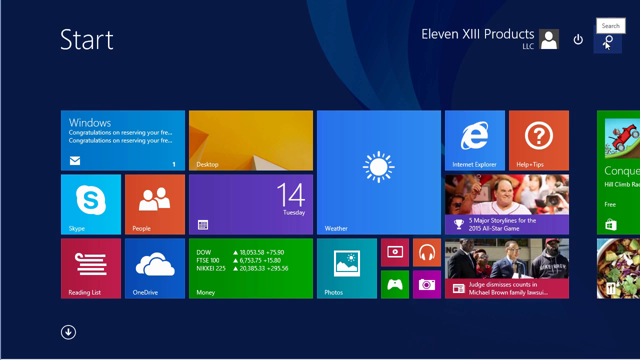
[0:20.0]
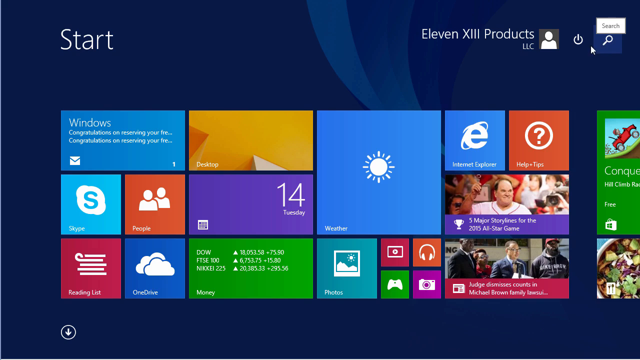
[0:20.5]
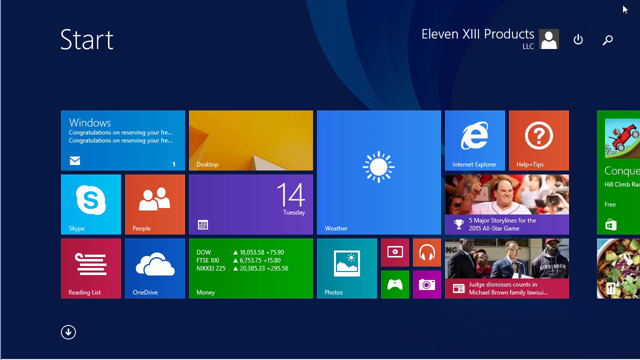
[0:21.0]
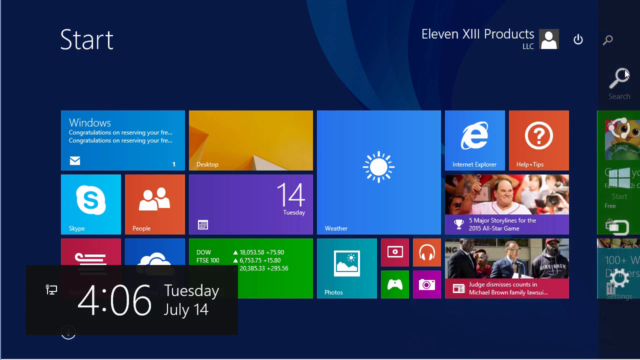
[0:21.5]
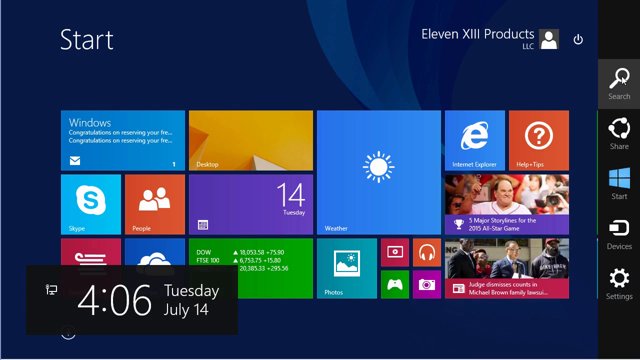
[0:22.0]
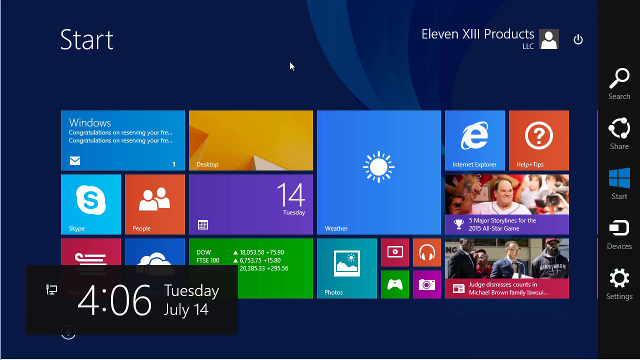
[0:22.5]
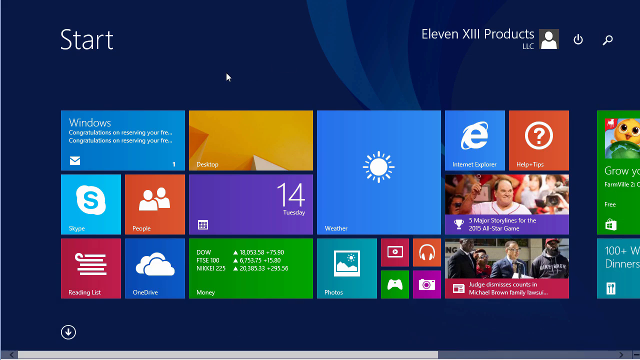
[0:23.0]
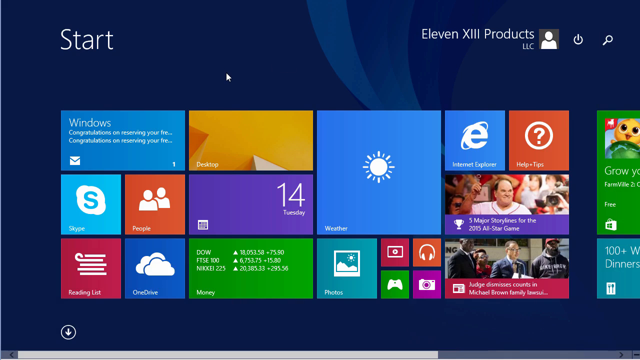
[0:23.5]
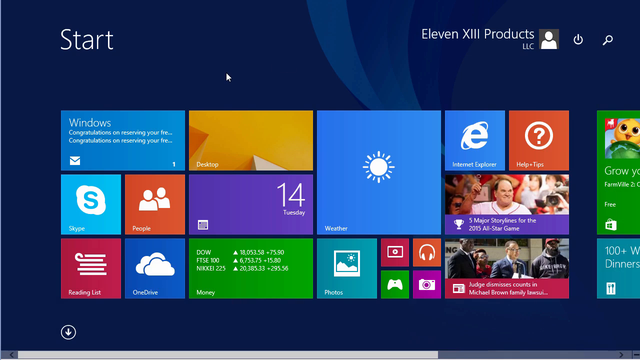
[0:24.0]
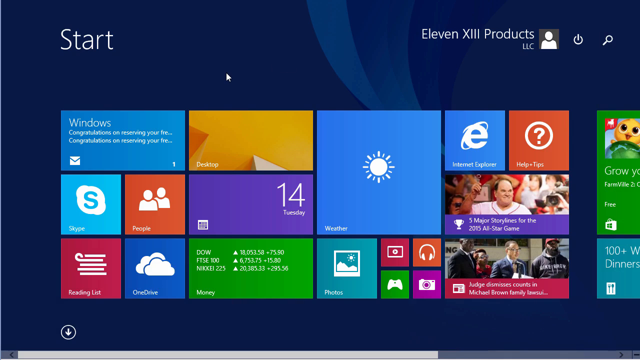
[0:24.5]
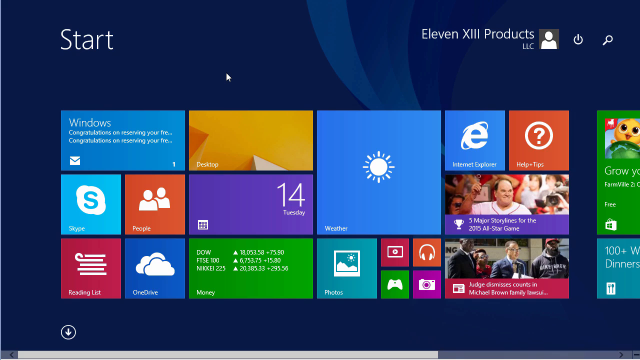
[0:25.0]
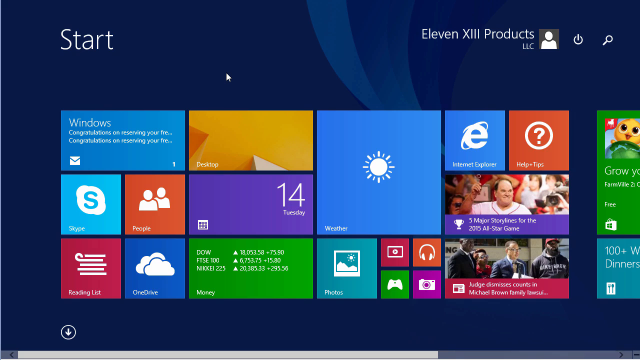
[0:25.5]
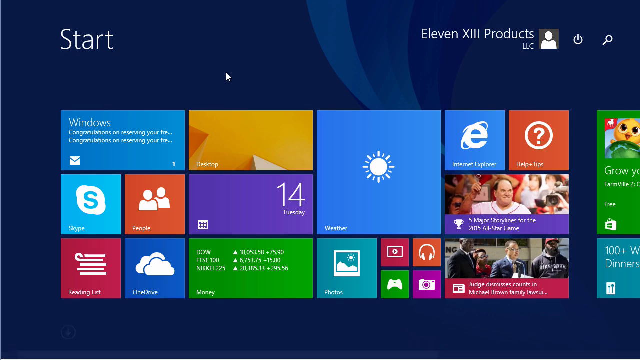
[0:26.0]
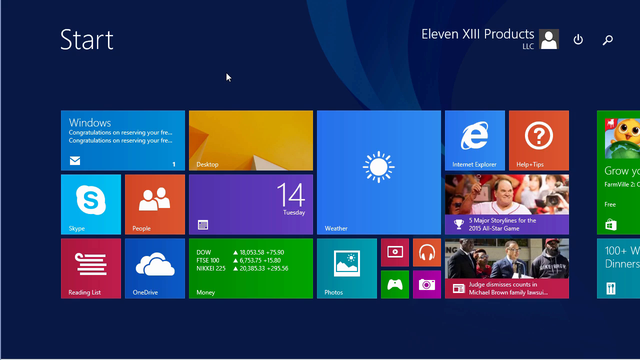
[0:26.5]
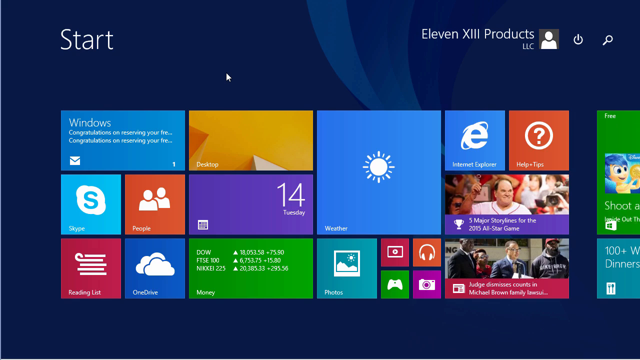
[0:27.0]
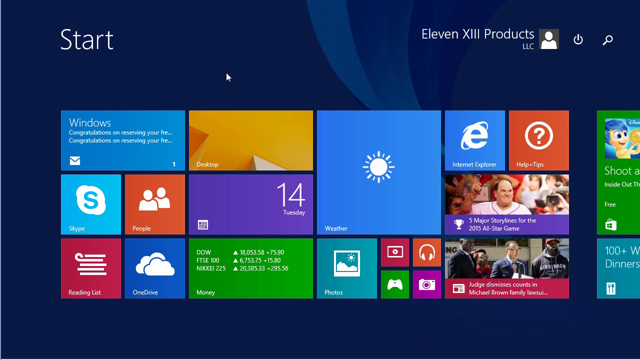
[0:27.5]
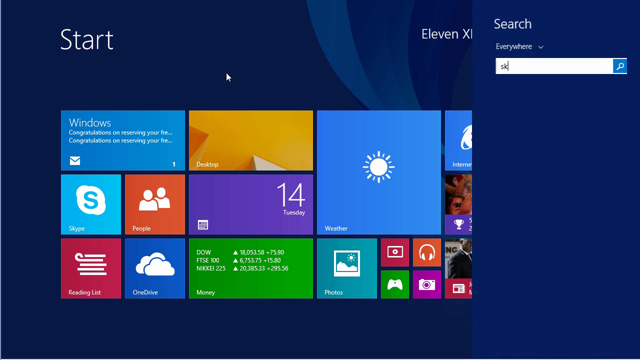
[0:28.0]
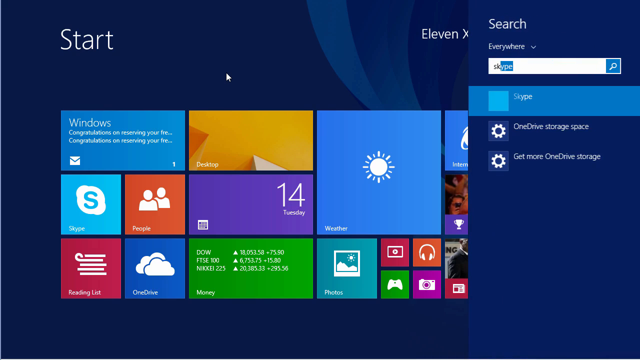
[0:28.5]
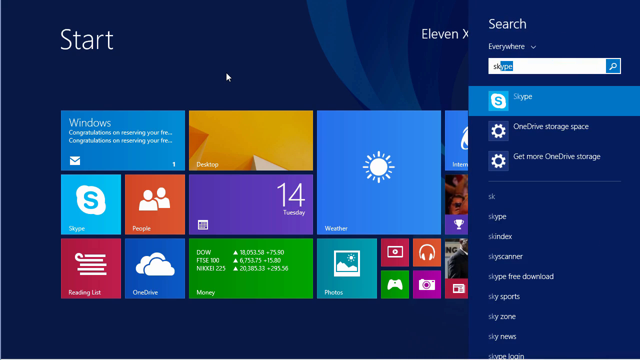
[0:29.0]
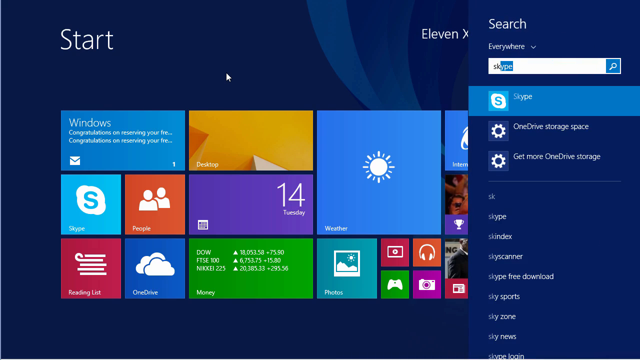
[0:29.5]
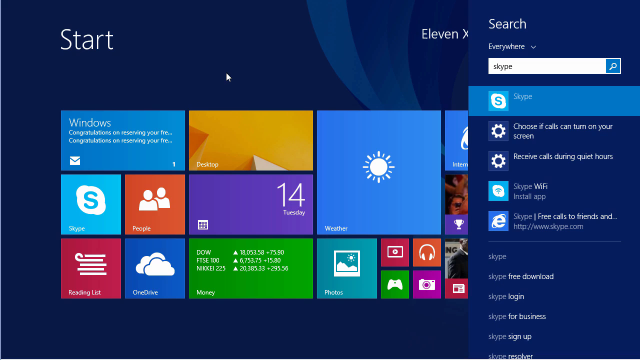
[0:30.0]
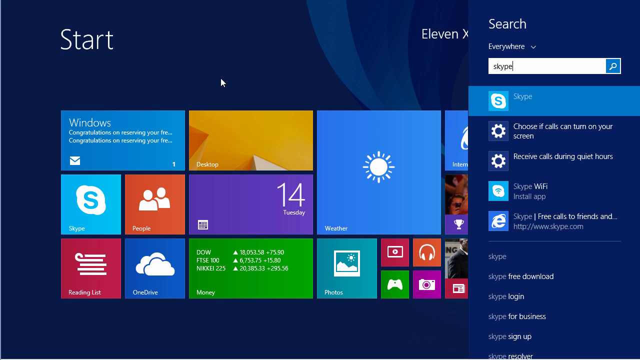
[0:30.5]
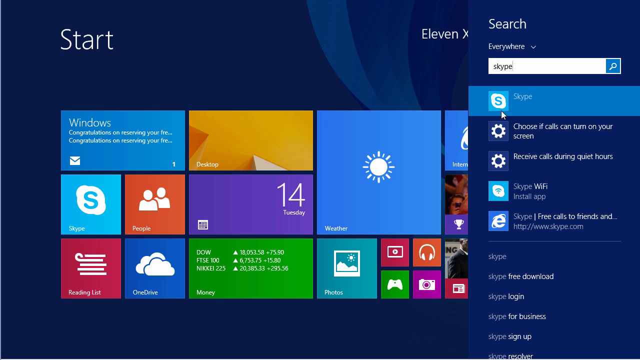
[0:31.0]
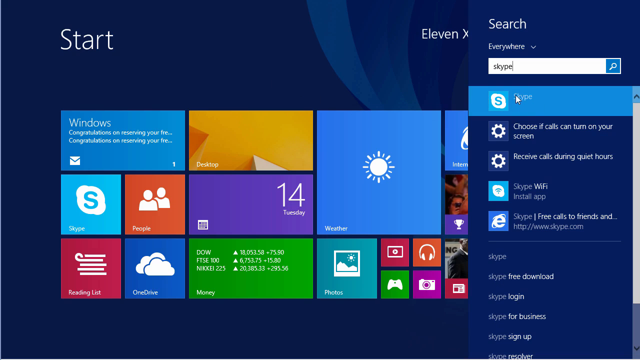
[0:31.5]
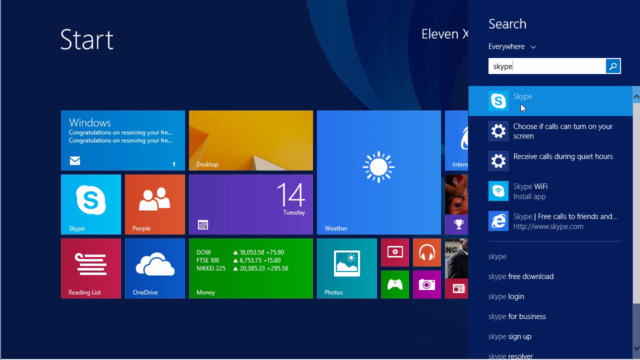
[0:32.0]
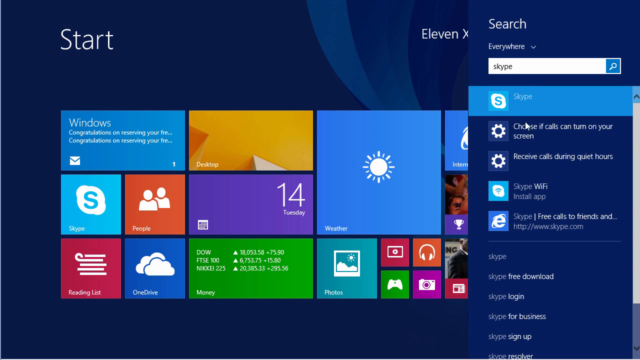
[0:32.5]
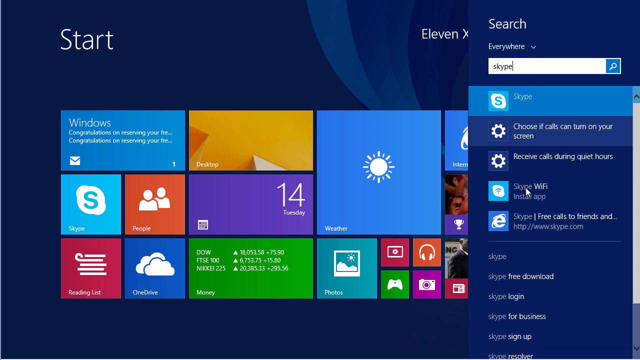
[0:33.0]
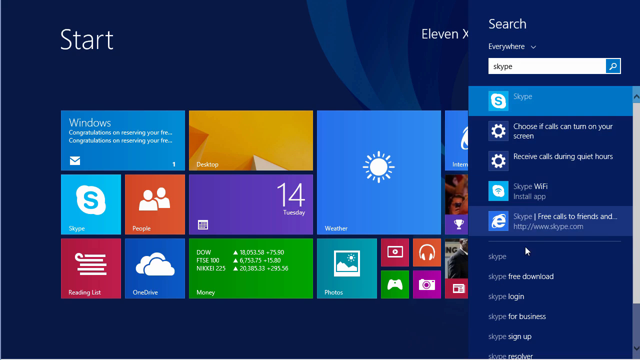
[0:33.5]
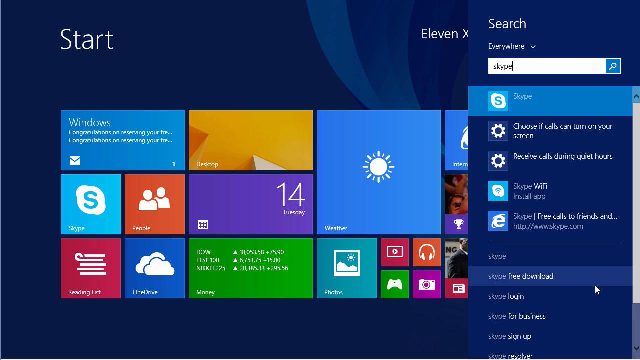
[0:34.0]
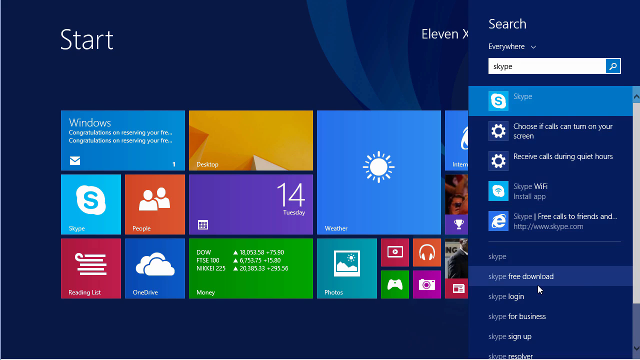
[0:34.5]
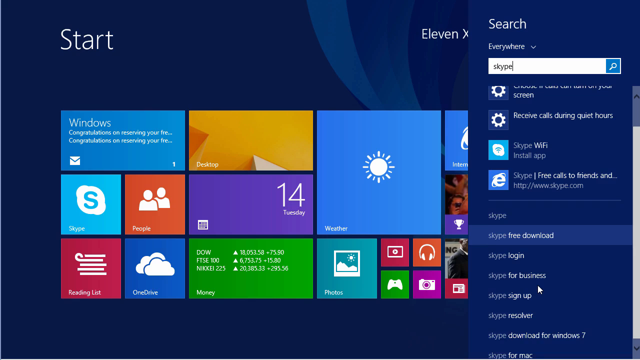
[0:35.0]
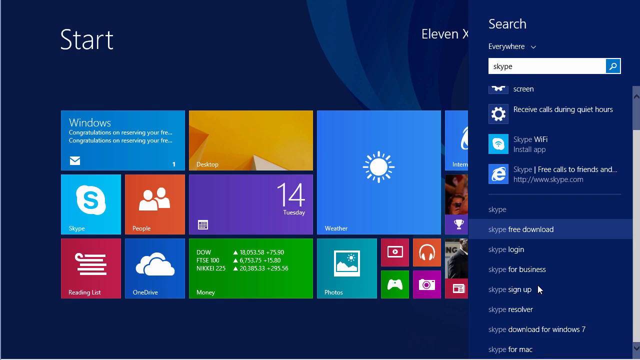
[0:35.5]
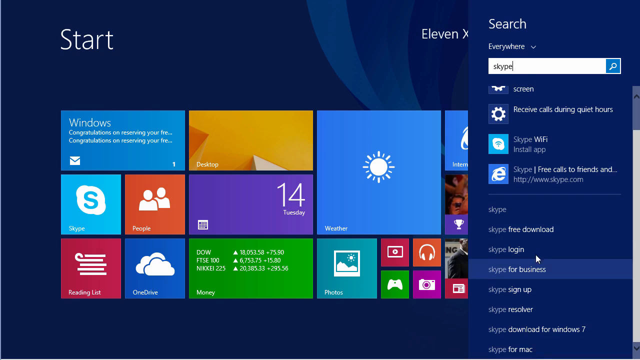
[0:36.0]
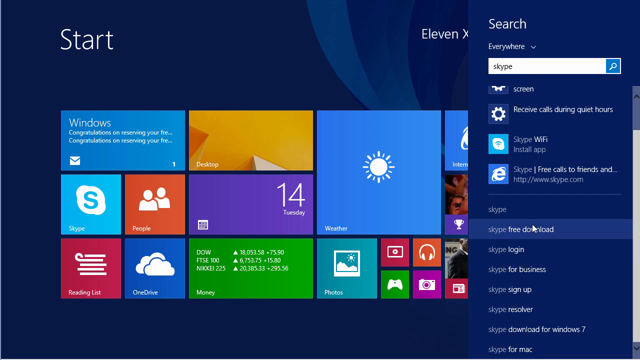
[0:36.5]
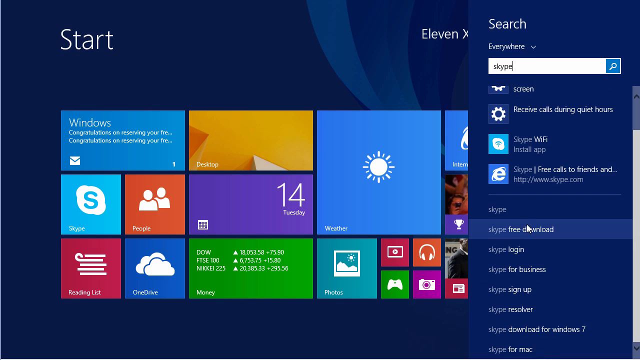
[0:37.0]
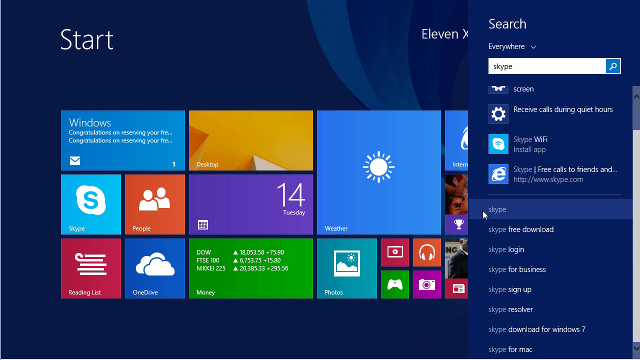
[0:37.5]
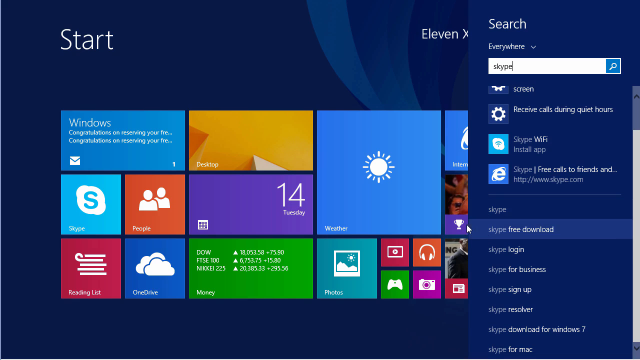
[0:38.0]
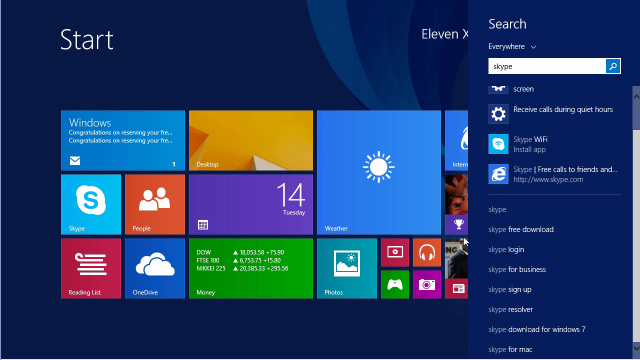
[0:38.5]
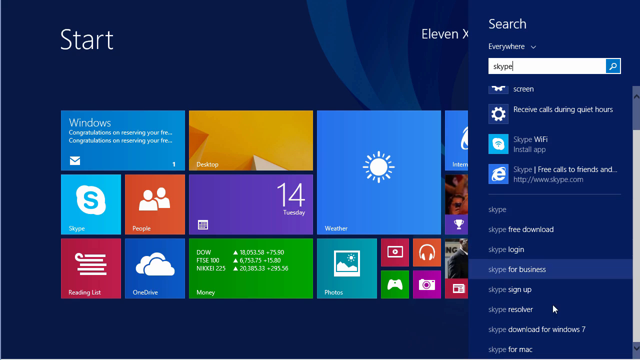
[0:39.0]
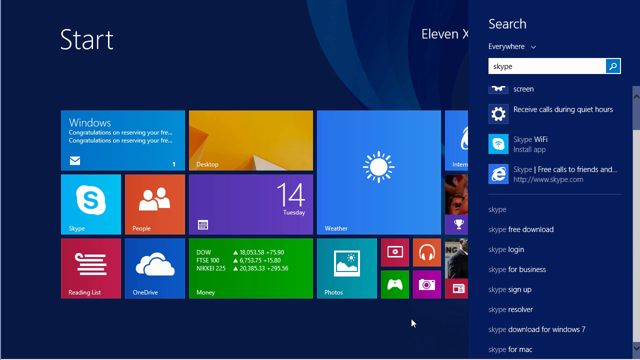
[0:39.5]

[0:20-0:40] A search for Skype brings up a range of related results: Skype Wi-Fi, the Skype app, Skype downloads, Skype logins, Skype for personal use, Skype for business, Skype signing up and Skype downloading.